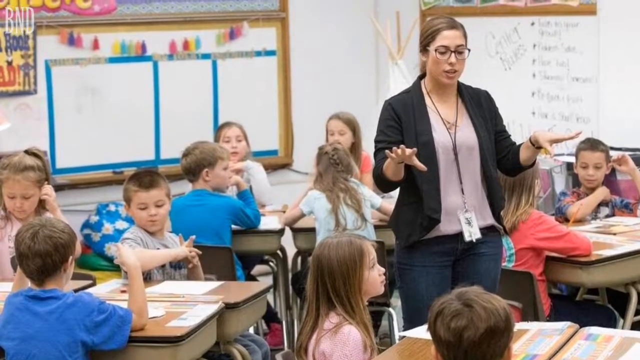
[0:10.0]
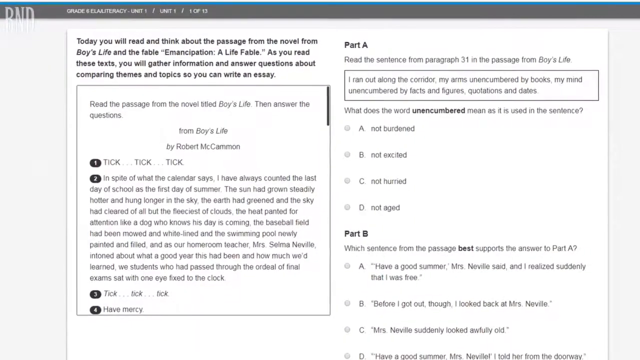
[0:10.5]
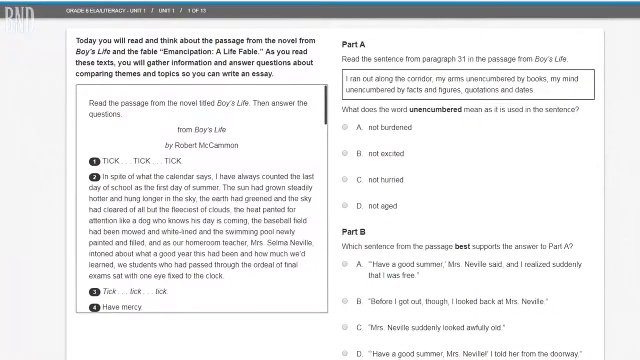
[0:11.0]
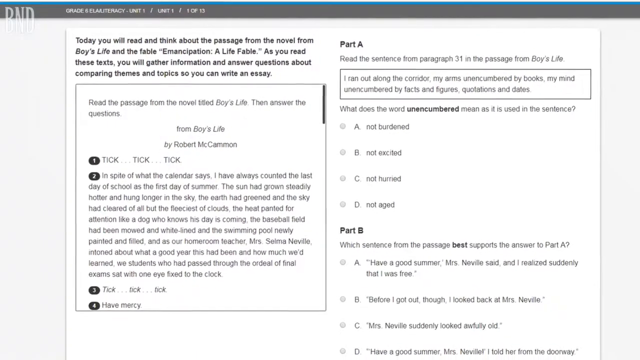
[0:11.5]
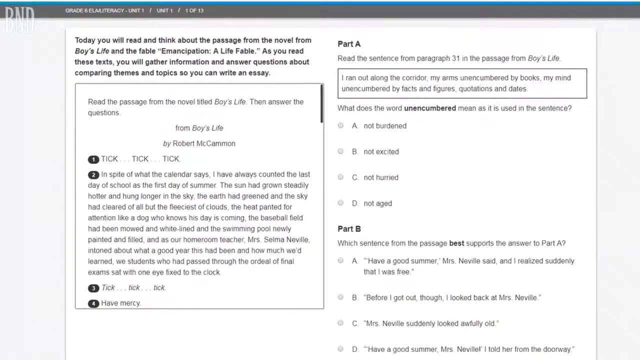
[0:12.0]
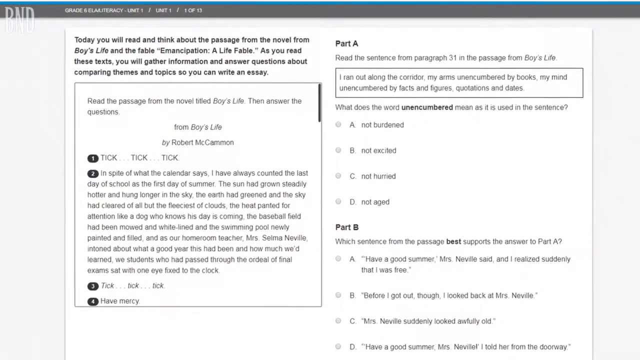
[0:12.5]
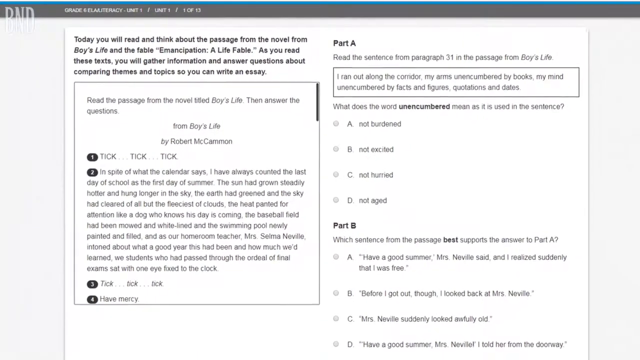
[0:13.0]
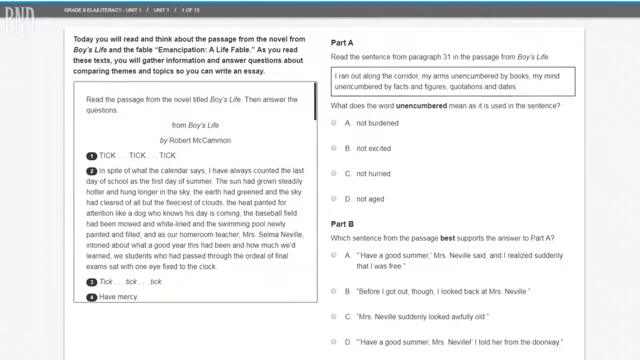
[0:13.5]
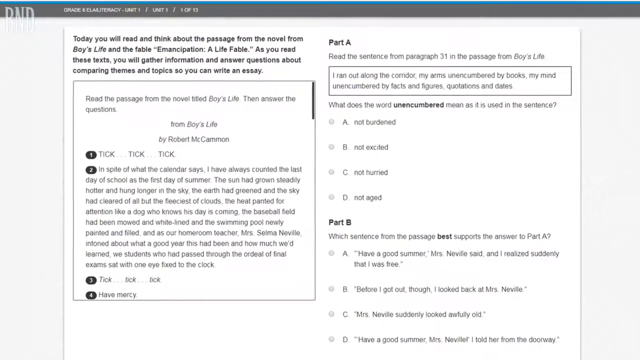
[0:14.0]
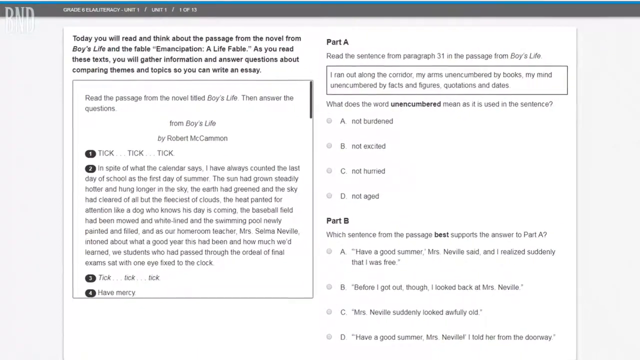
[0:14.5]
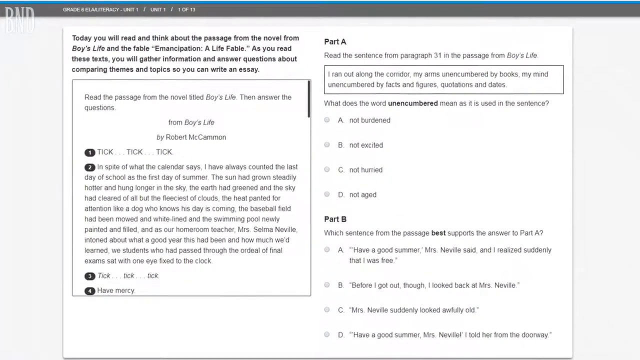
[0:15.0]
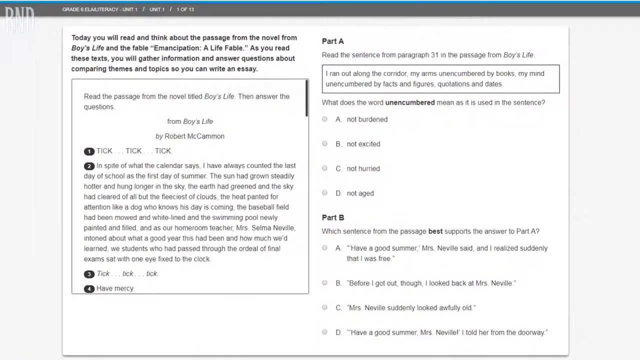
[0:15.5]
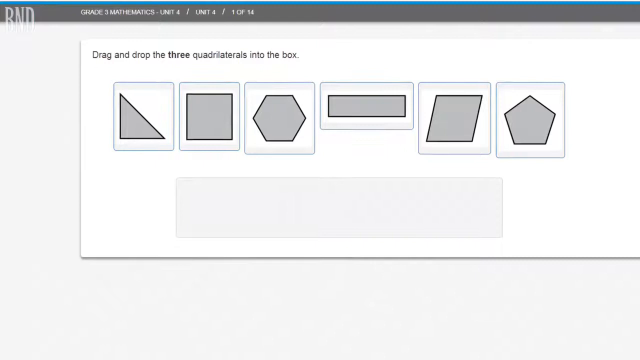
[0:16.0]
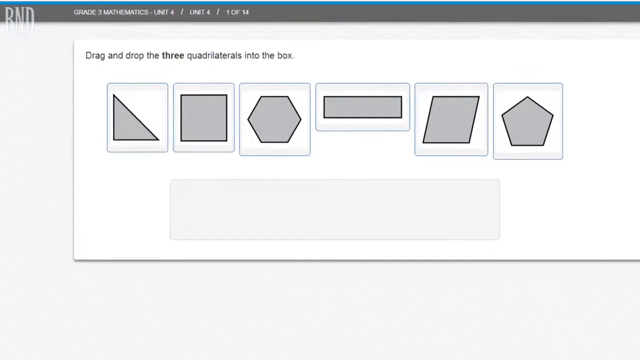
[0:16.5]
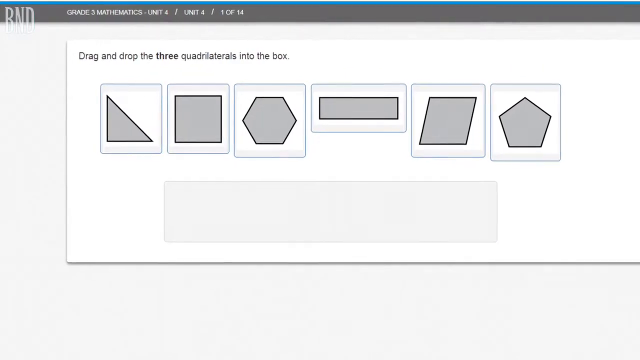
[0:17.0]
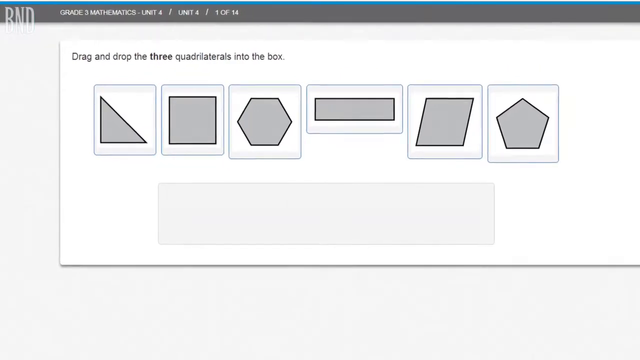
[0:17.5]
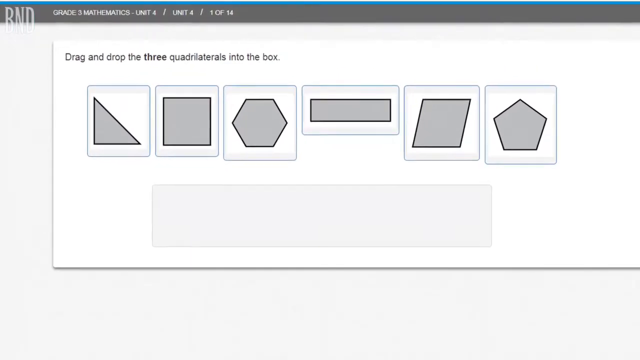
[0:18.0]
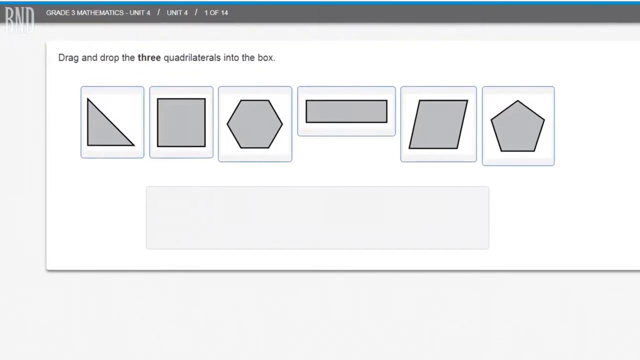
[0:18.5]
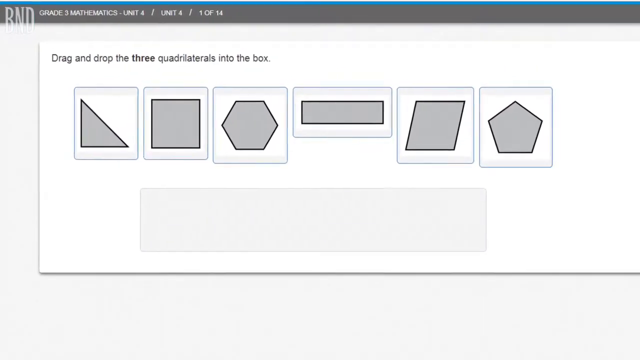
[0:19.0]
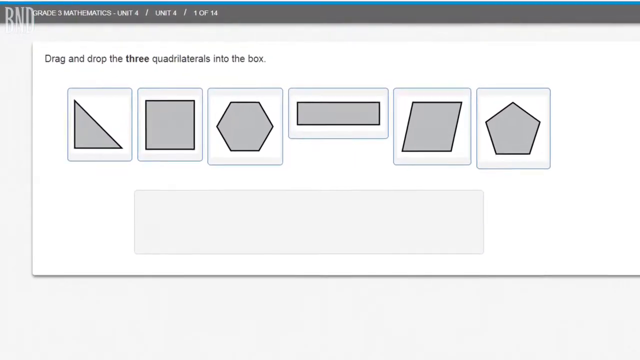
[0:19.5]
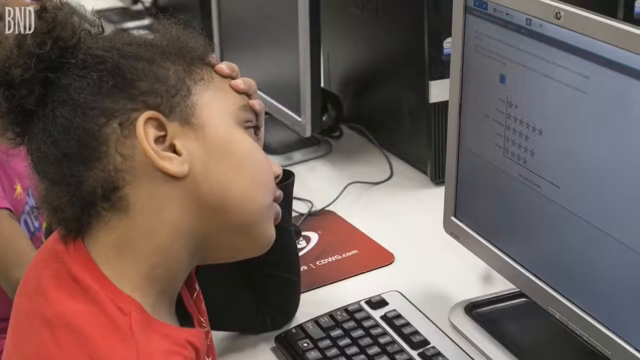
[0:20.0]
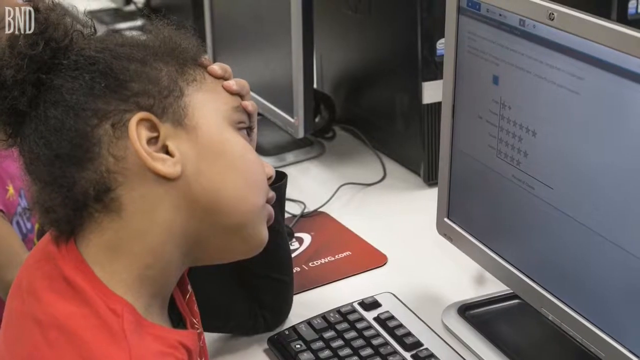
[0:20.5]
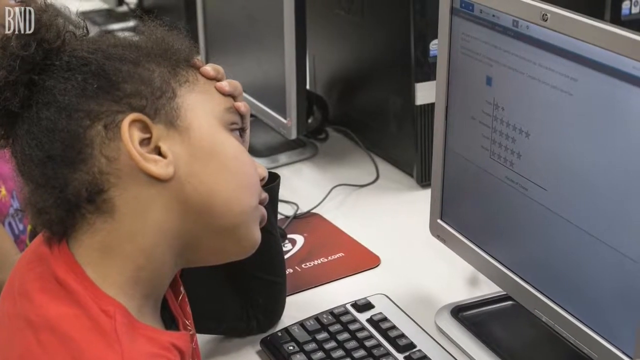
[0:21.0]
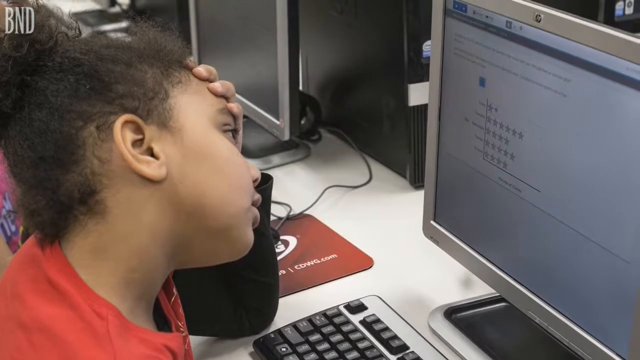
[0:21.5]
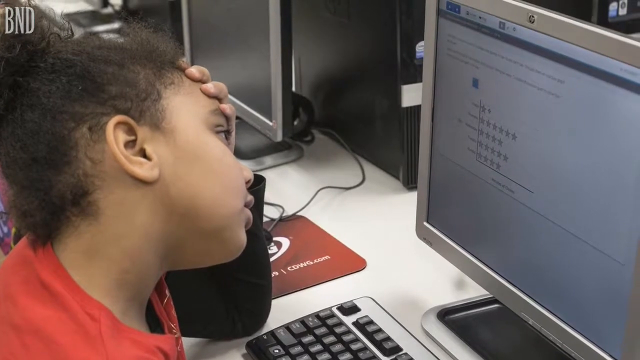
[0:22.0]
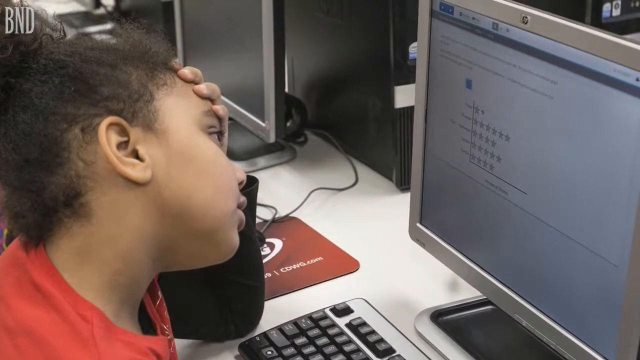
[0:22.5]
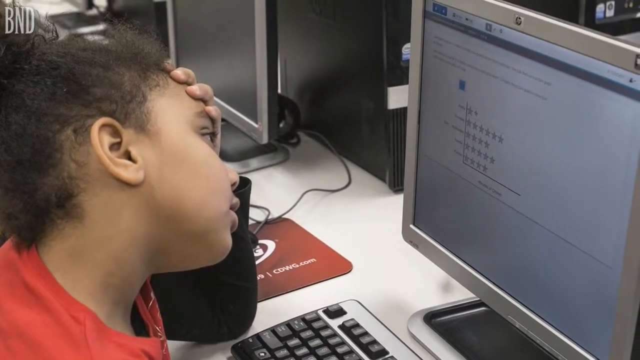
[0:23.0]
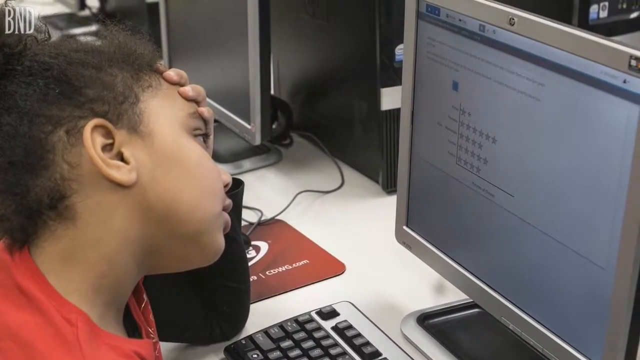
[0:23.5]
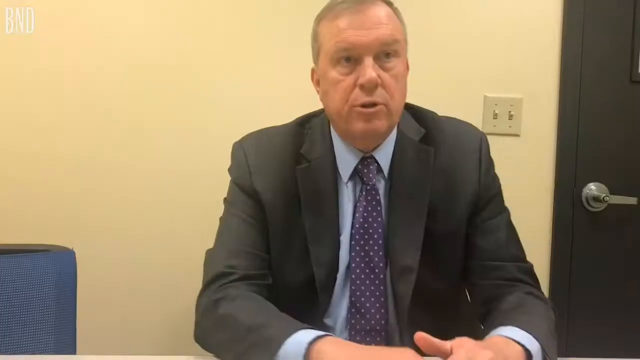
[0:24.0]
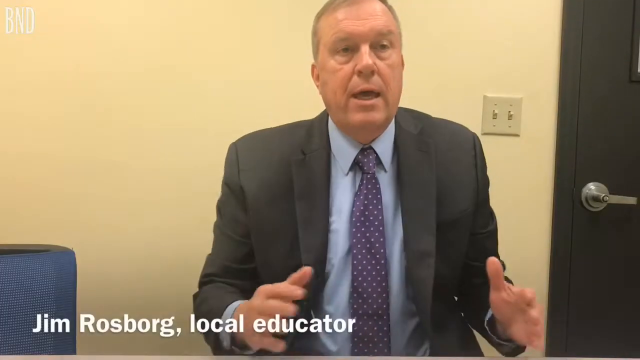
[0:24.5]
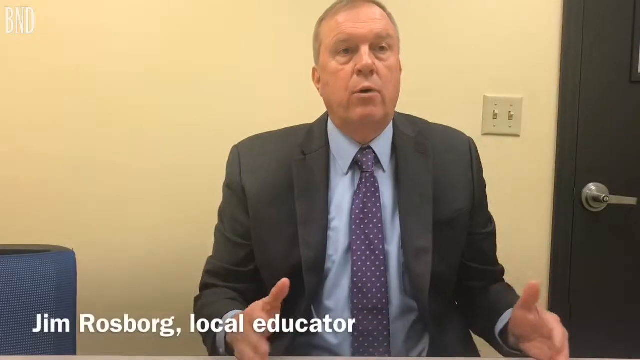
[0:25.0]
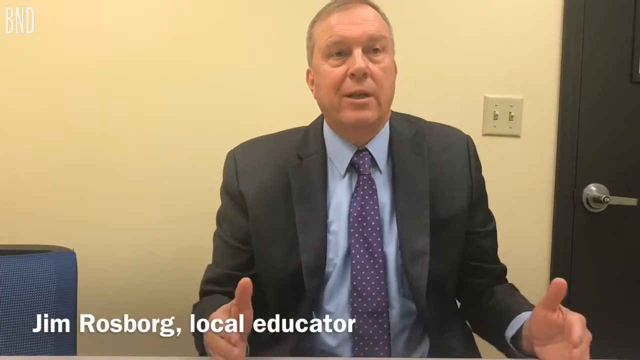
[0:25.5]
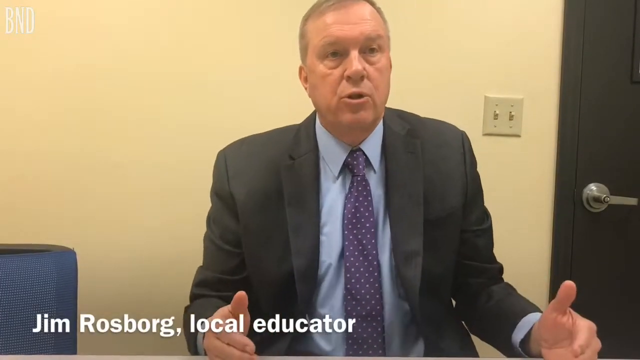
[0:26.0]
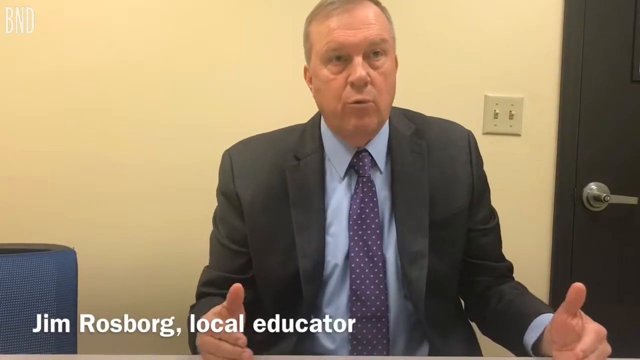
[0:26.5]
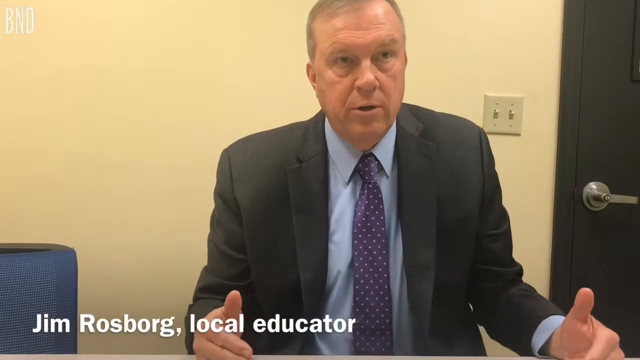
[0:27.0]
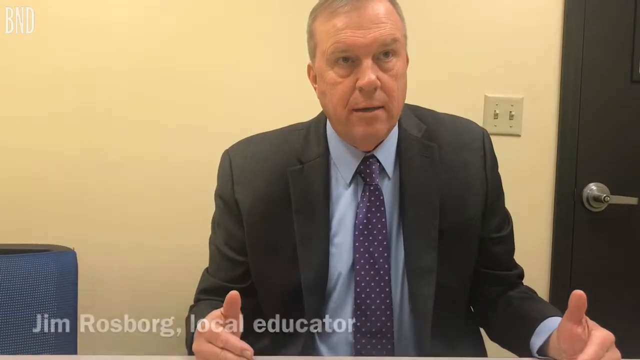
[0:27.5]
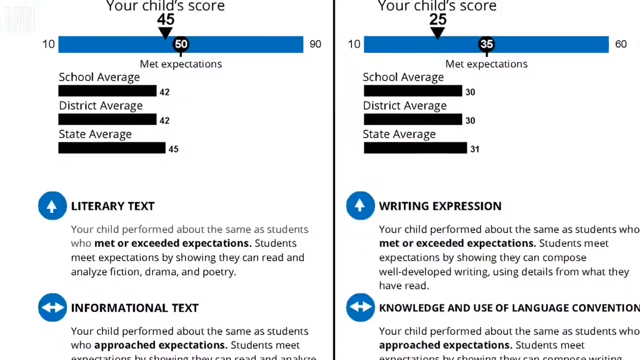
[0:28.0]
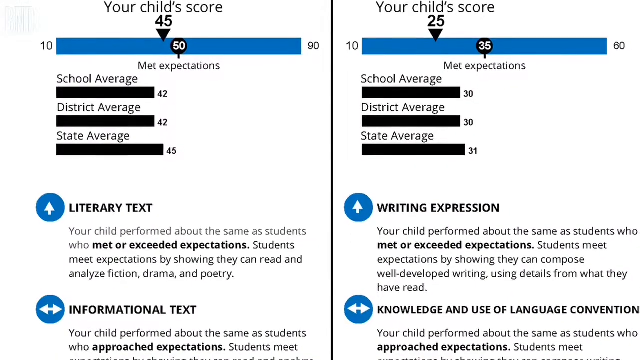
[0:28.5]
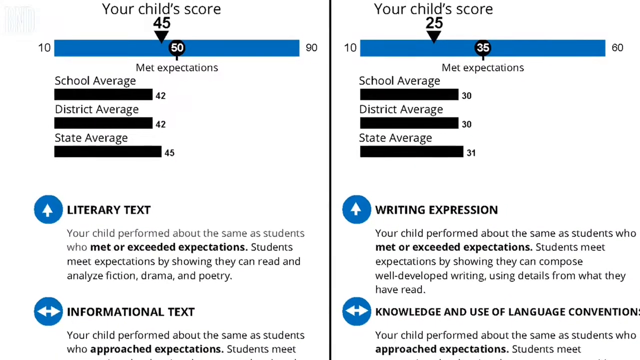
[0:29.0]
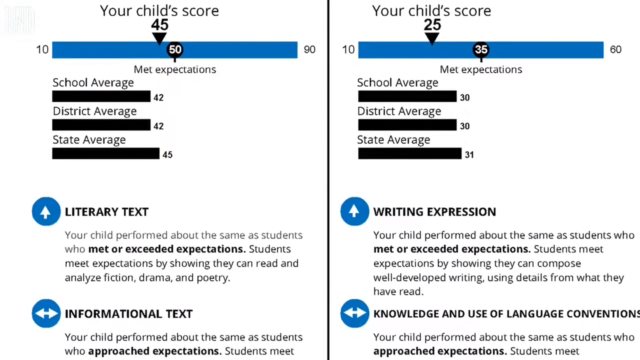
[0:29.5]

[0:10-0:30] The picture of the woman continues. She wears glasses, a pink top and blue jeans, and has what seems to be a teacher's card or ID card around her neck. She addresses the learners, using hand gestures as though explaining something. The class includes a few white children, many with long hair, and several young boys. Next, a question paper appears with text reading "today you will read and think about the passage from the novel from Boy's Life and the fable Emancipation, A Life's Fable. As you read these texts you will get information and answer these questions about comparing themes and topics so you can write an essay." On the right-hand side are "part A" and "part B," and on the lower left is a novel from Boy's Life.